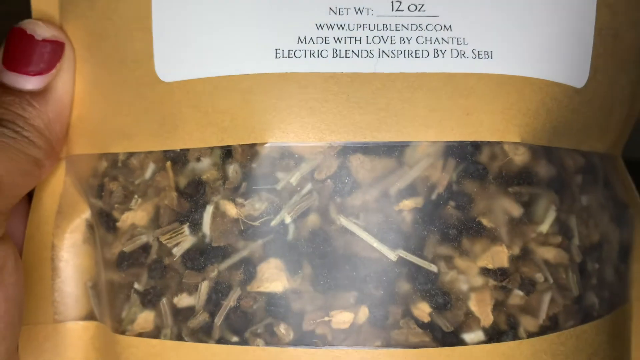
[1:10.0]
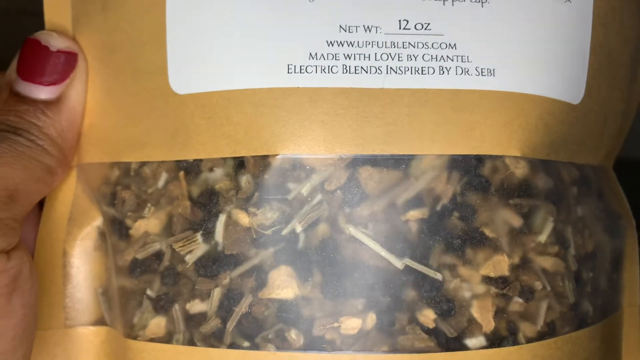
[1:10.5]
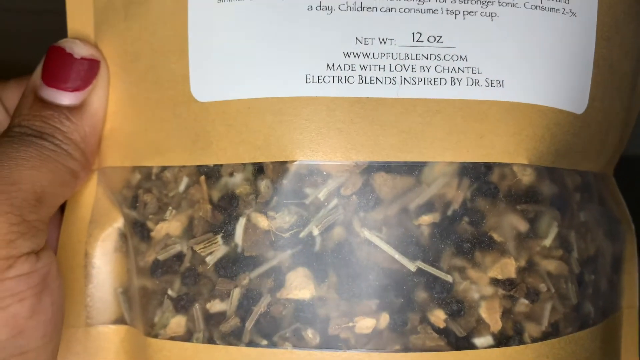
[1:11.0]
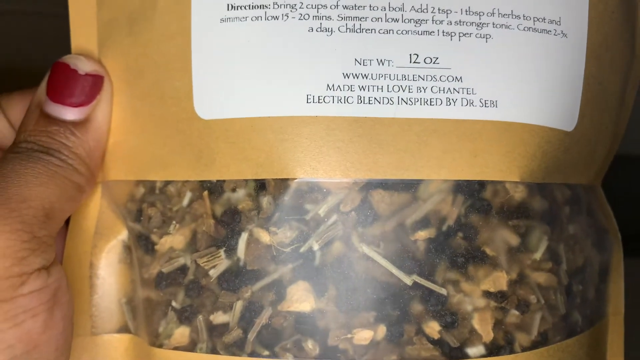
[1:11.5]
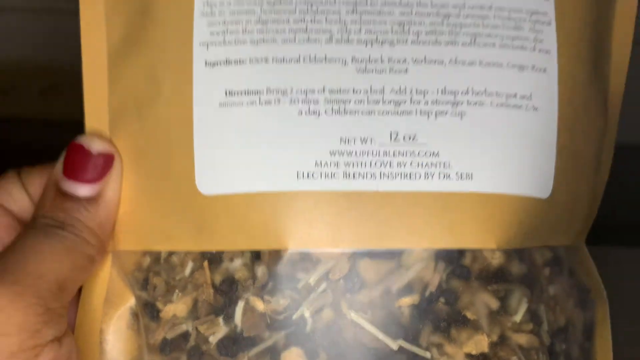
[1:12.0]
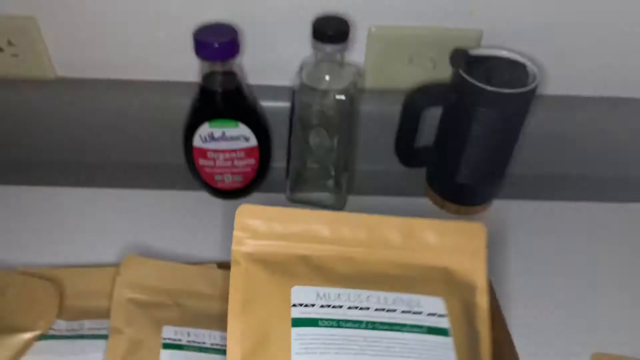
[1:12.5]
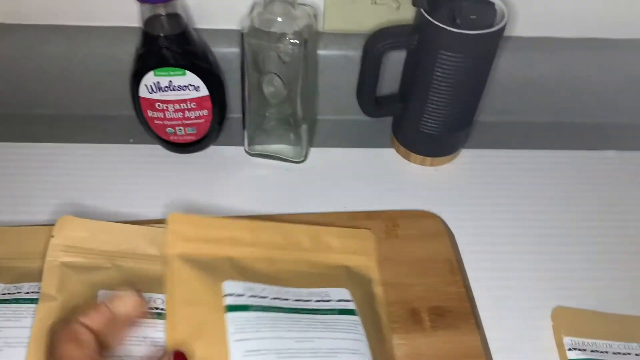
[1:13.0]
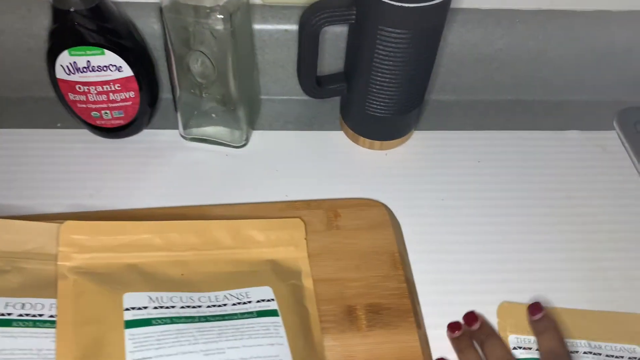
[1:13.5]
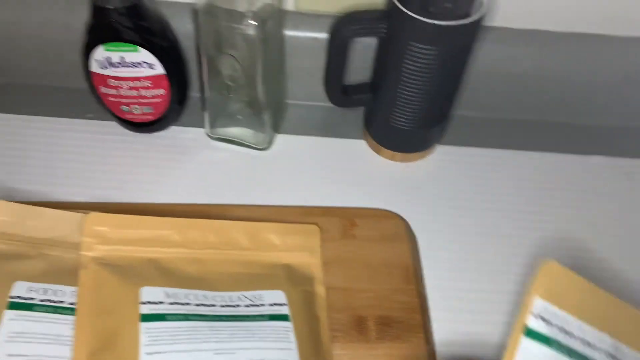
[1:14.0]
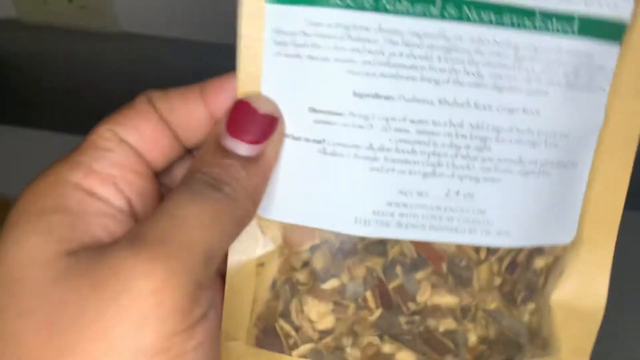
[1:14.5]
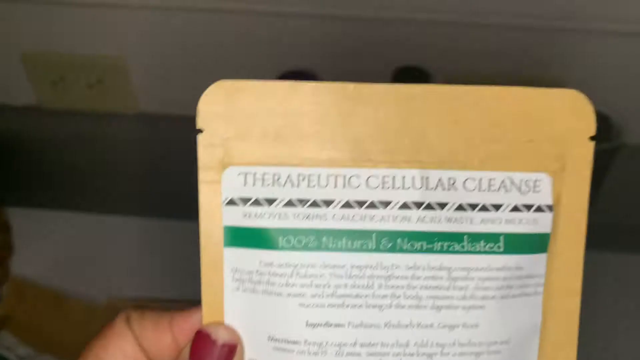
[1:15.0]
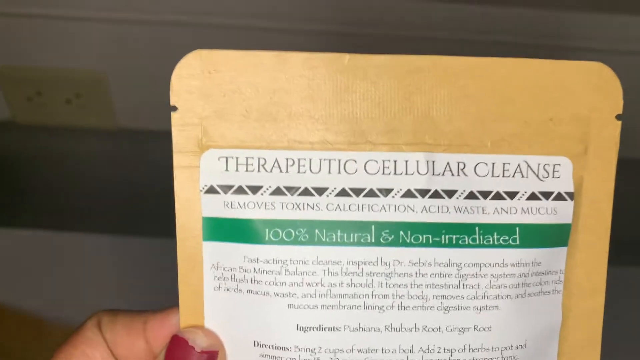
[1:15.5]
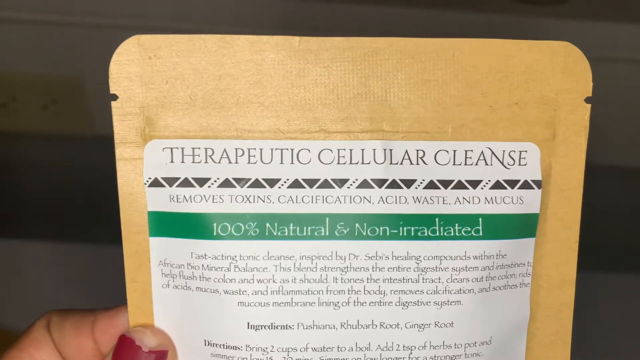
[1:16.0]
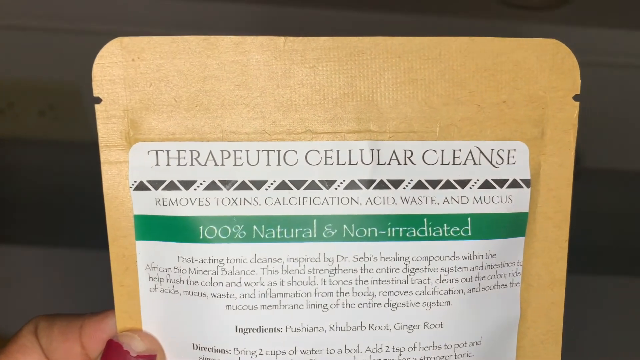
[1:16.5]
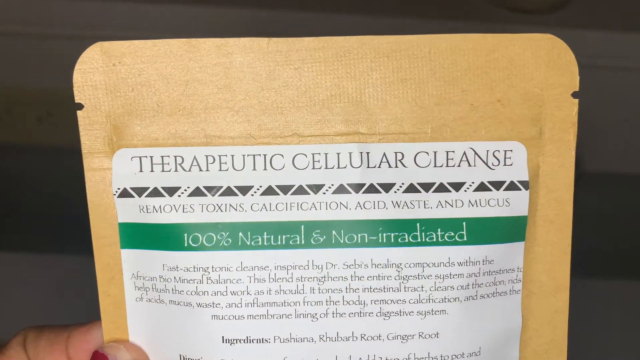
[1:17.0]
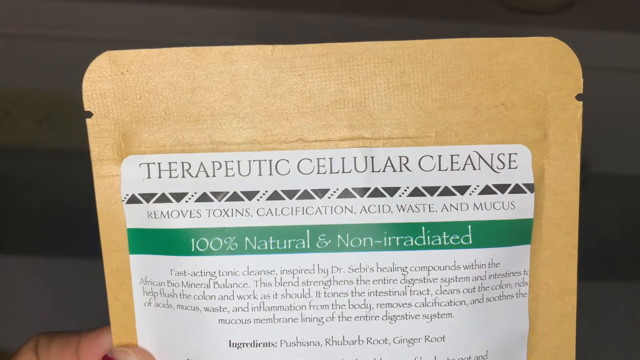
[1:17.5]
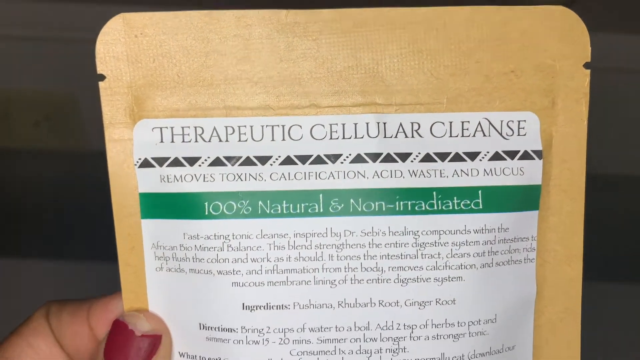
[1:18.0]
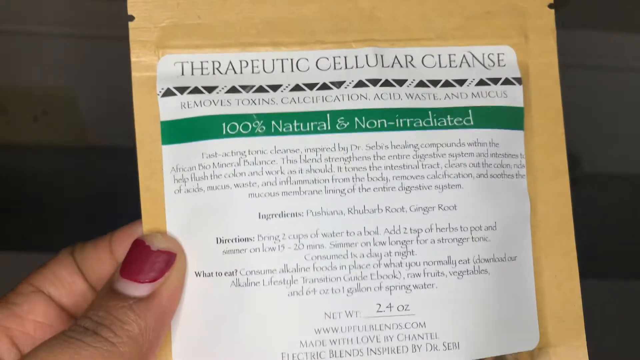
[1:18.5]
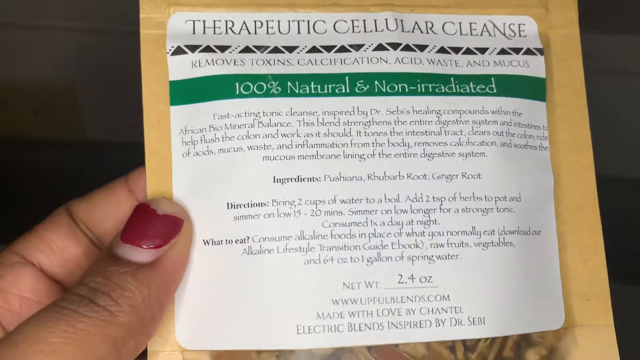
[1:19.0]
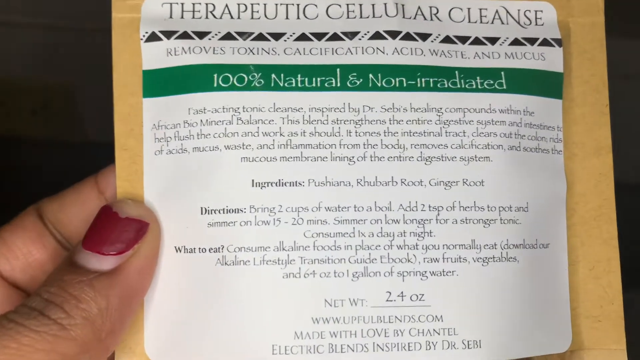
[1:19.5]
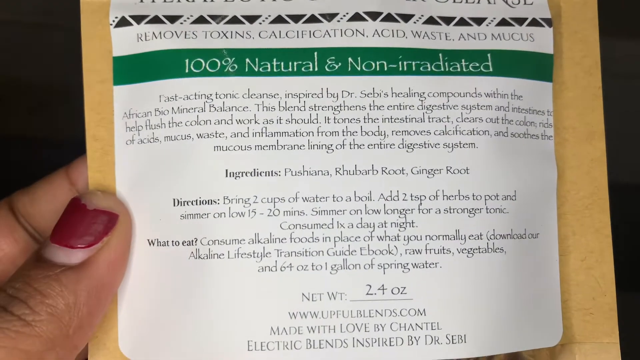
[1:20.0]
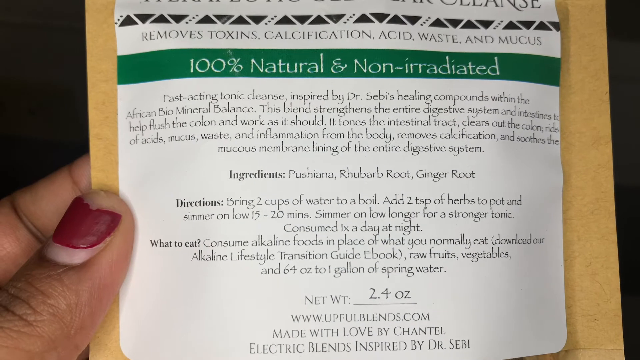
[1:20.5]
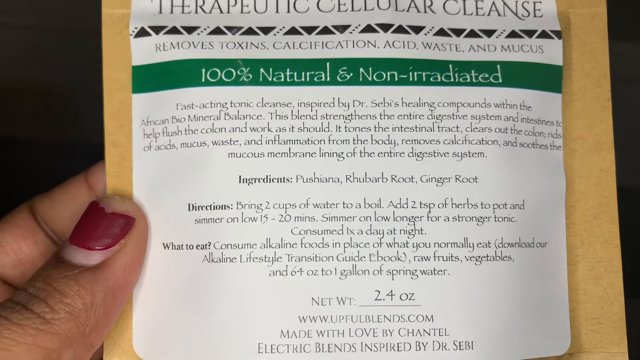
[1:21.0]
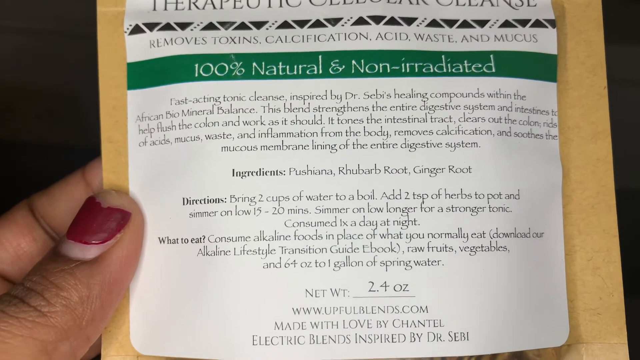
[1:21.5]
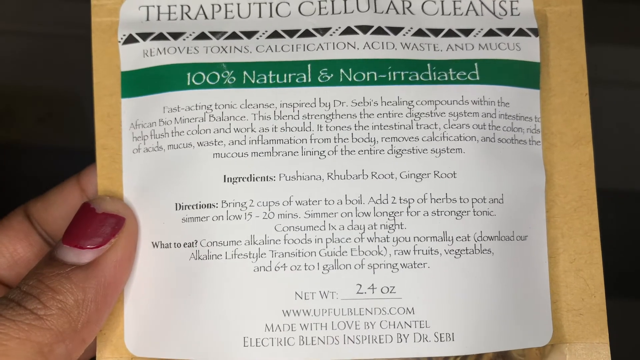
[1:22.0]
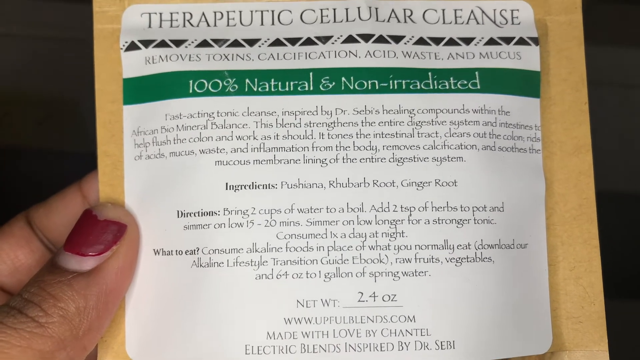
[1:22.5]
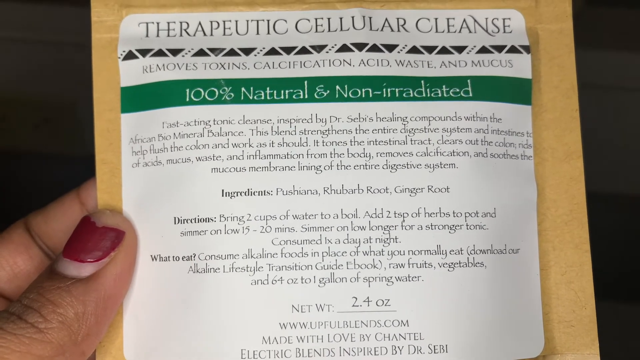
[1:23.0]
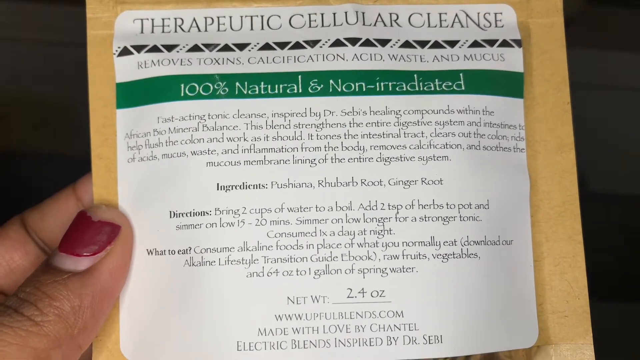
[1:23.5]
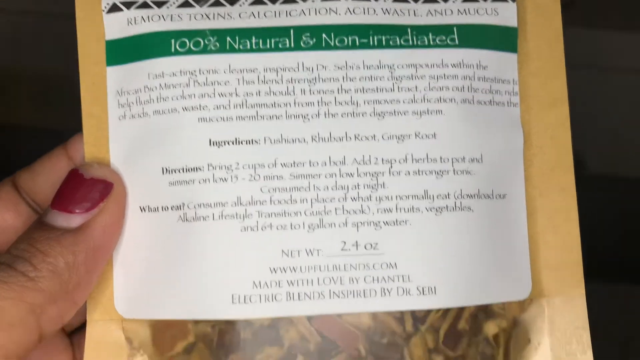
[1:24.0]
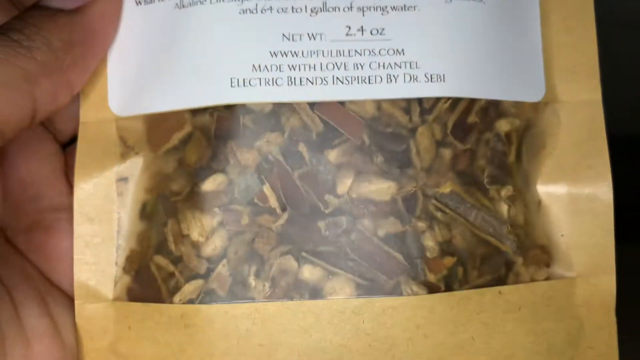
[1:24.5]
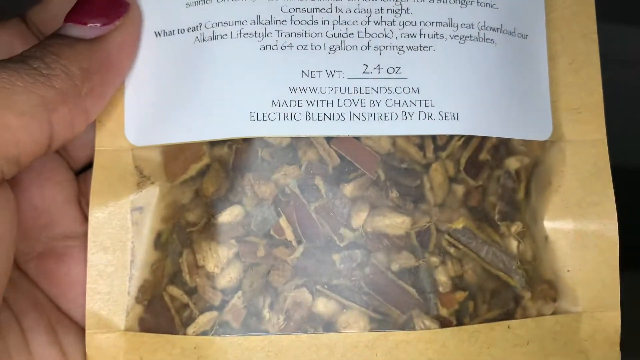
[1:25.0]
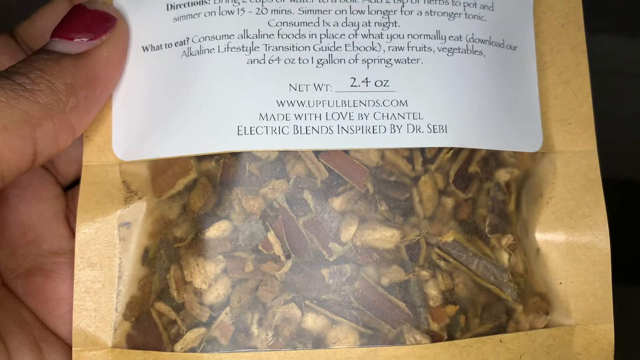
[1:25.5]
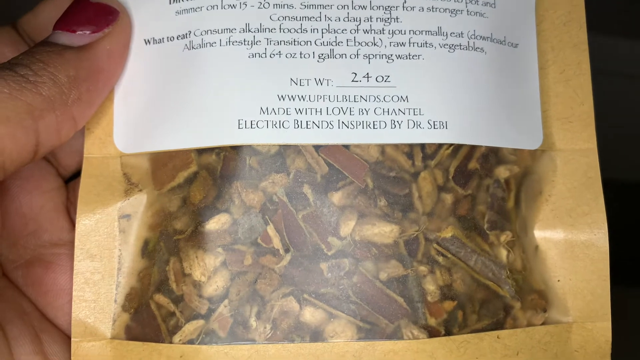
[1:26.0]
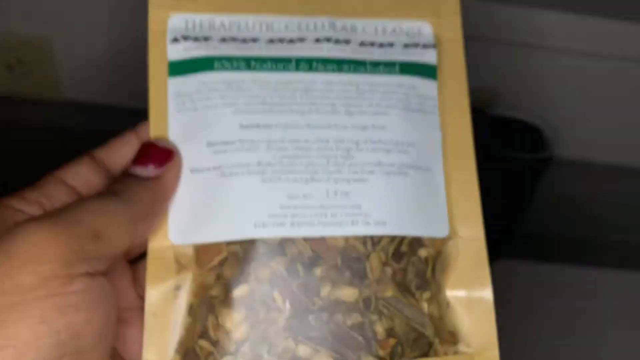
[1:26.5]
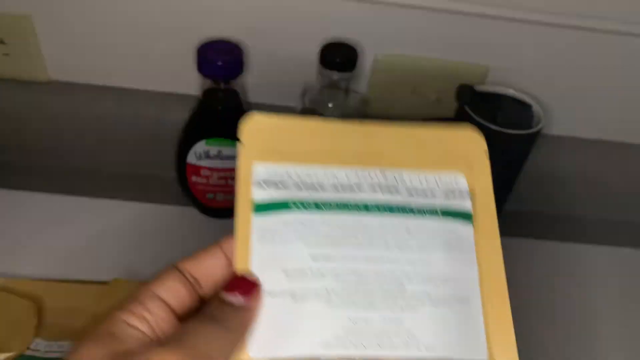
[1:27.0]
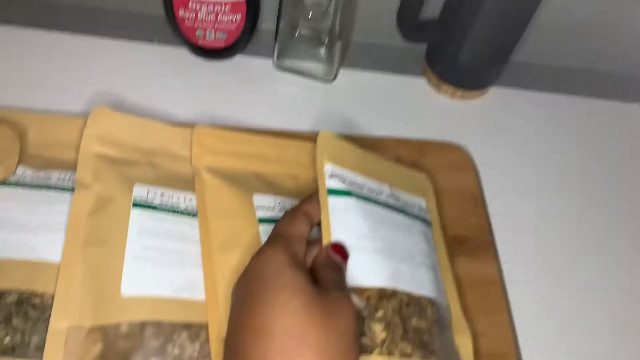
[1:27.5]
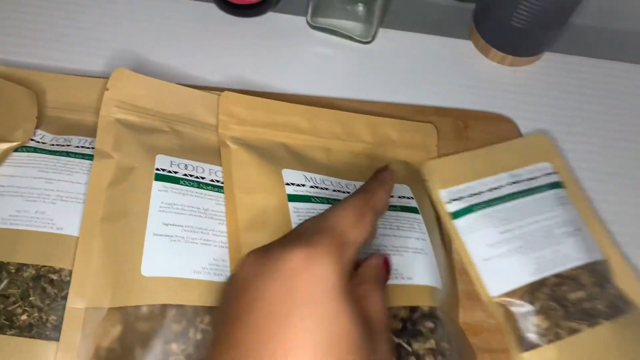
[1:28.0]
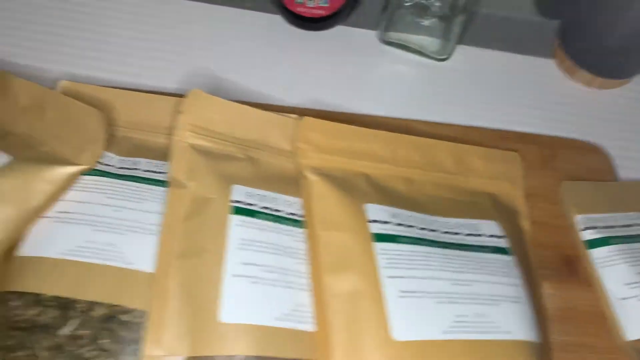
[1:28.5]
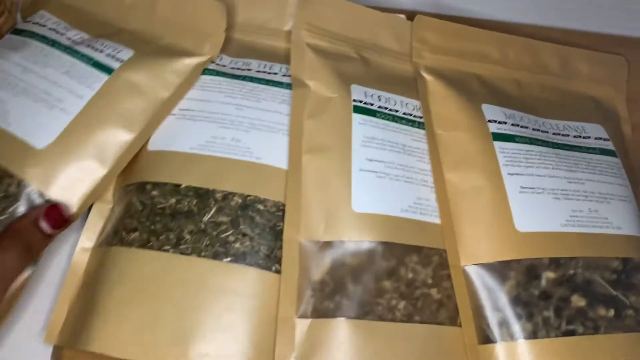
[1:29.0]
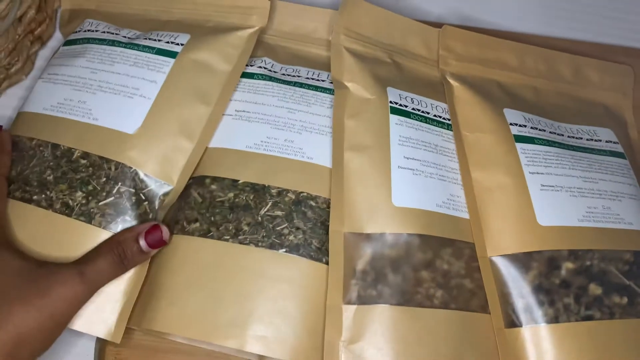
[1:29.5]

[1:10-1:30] The woman picks up another bag, this one for "therapeutic cellular cleanse," marked "100% natural and non-irradiated" with a weight of 2.4 oz. She puts it down and picks up another one. The package is khaki, written in white, with a white sticker written in black and green. It also has instructions for use. Four packets are still visible; the writing on them differs, but they are designed, labeled and packaged the same. Nothing changes except when the woman puts a bag down and picks another one up. The instructions cannot be read exactly, but they relate to what is inside the package.